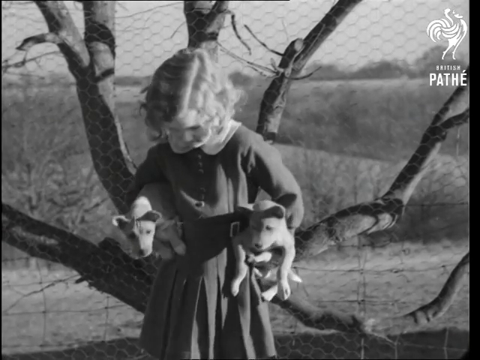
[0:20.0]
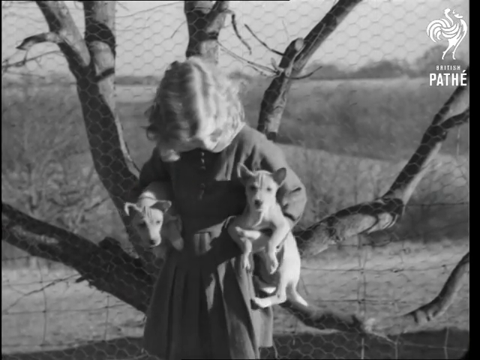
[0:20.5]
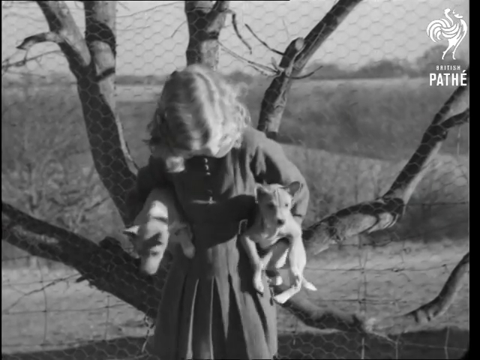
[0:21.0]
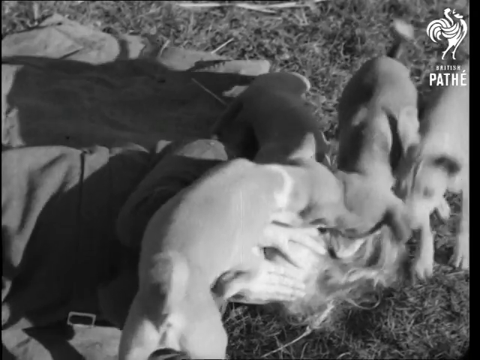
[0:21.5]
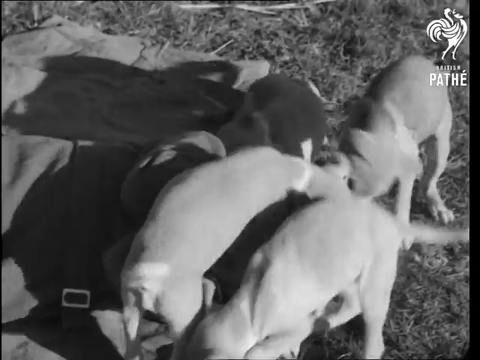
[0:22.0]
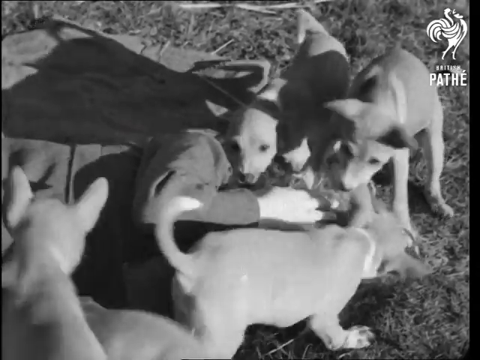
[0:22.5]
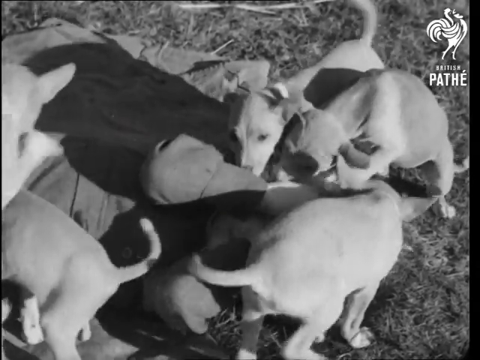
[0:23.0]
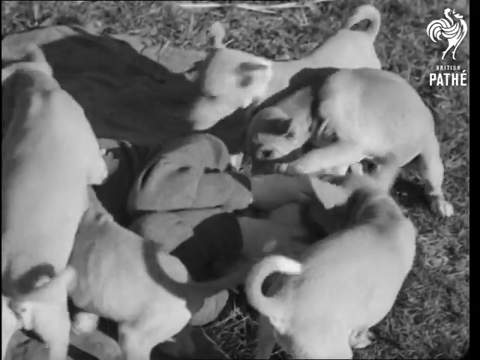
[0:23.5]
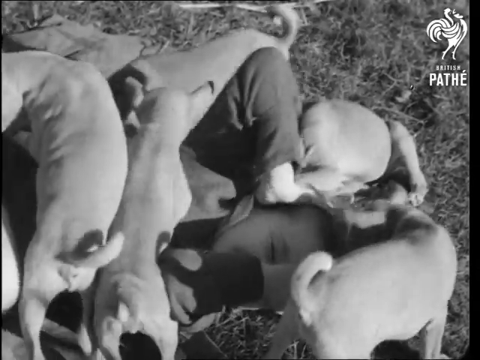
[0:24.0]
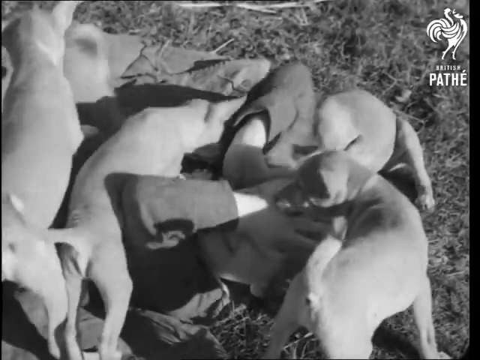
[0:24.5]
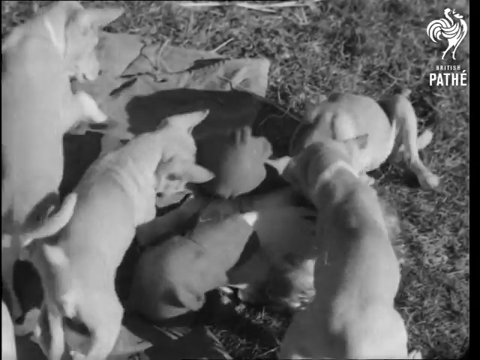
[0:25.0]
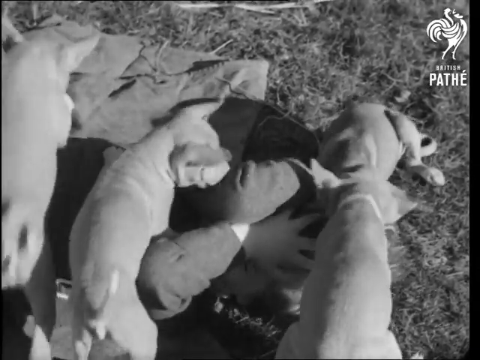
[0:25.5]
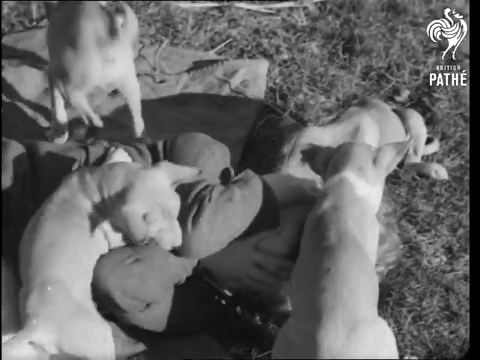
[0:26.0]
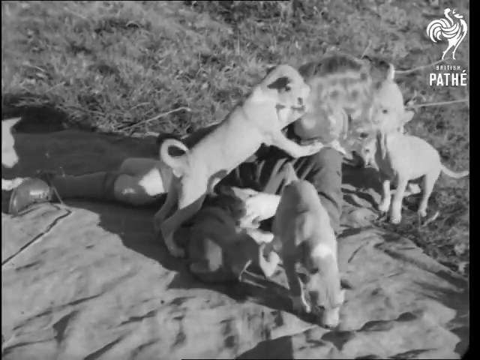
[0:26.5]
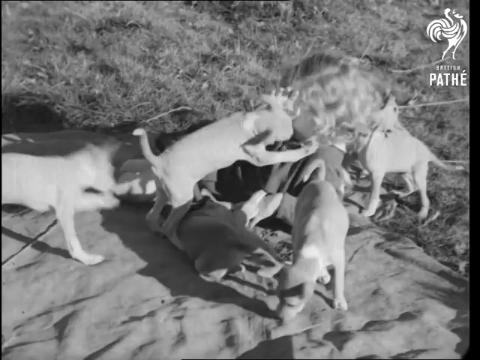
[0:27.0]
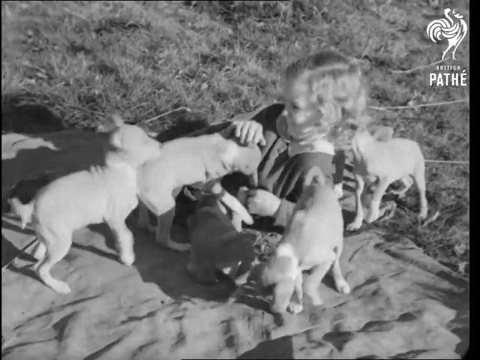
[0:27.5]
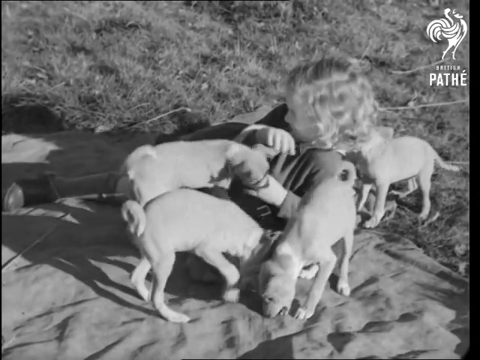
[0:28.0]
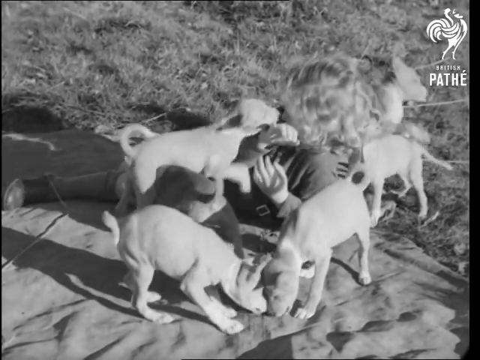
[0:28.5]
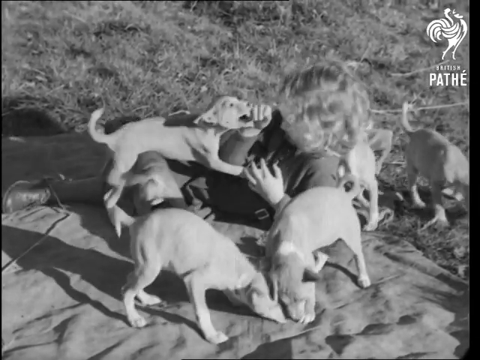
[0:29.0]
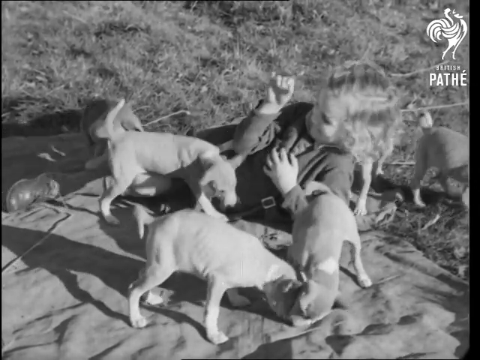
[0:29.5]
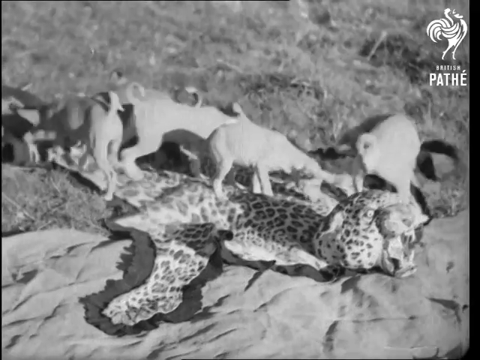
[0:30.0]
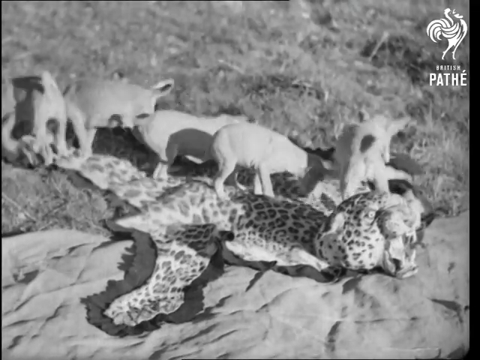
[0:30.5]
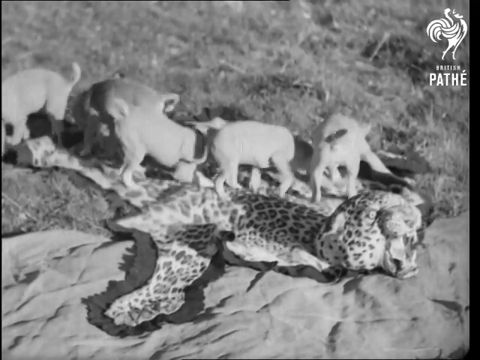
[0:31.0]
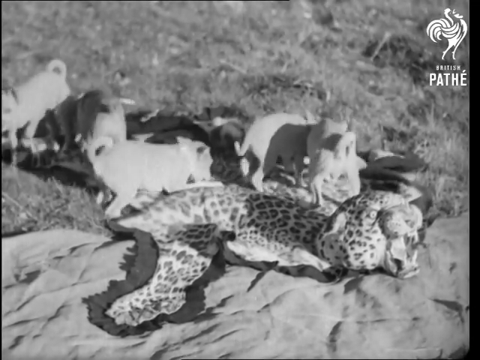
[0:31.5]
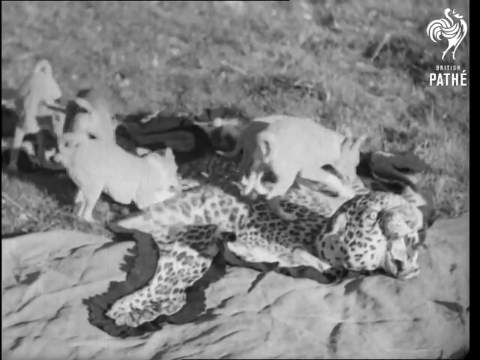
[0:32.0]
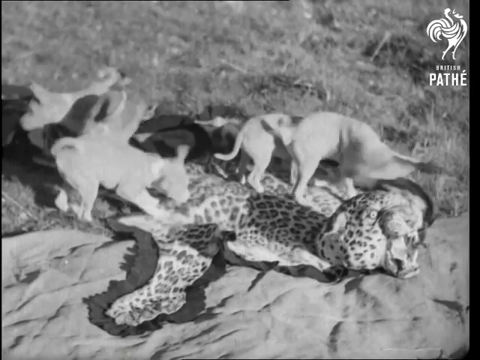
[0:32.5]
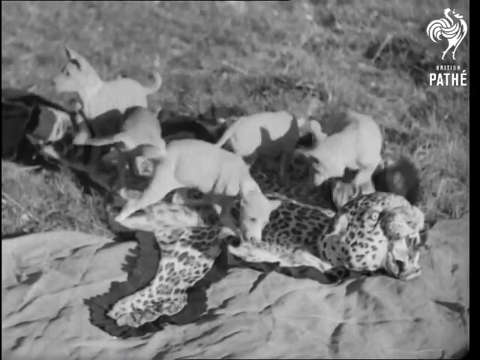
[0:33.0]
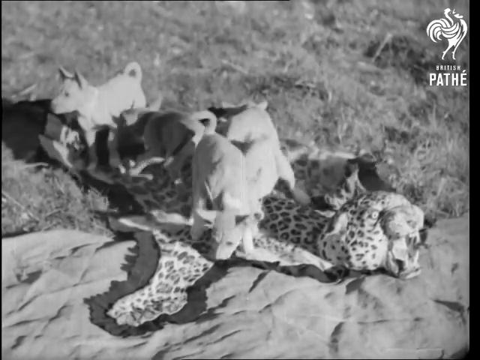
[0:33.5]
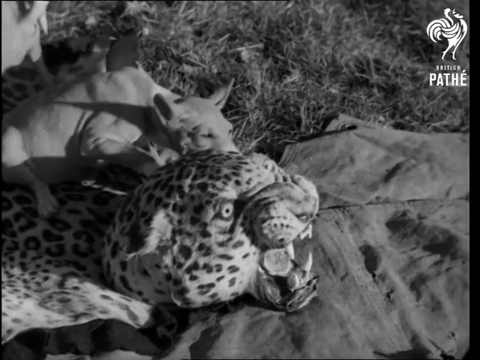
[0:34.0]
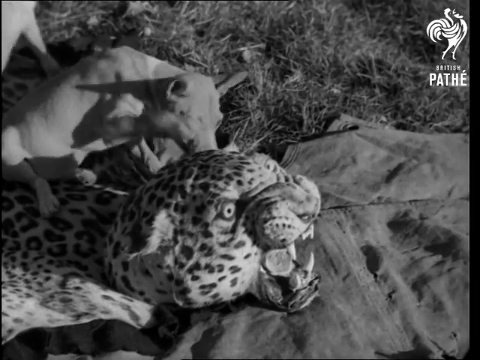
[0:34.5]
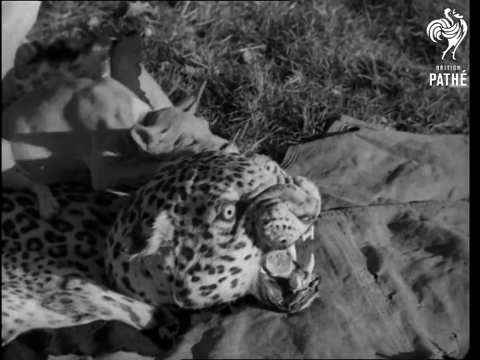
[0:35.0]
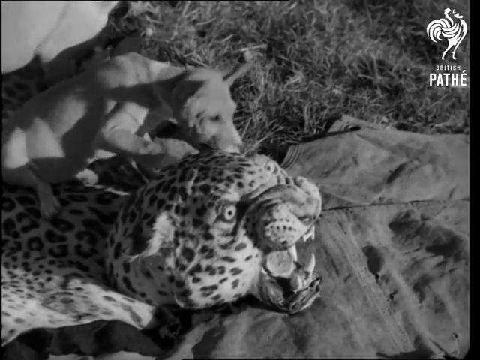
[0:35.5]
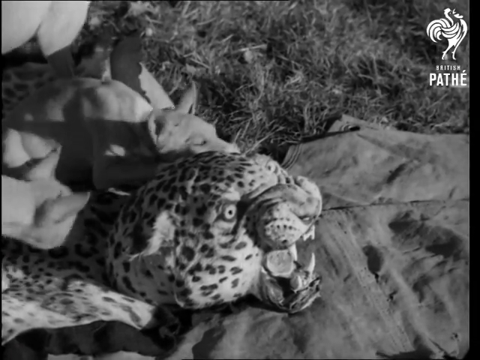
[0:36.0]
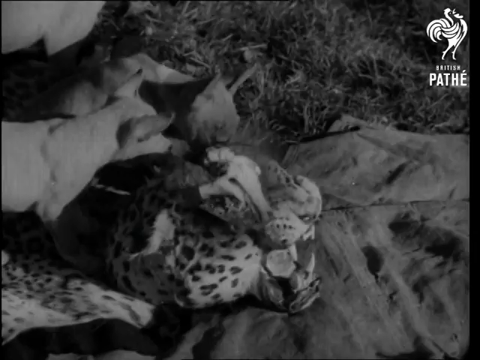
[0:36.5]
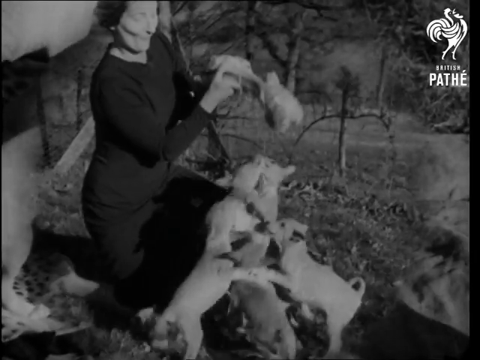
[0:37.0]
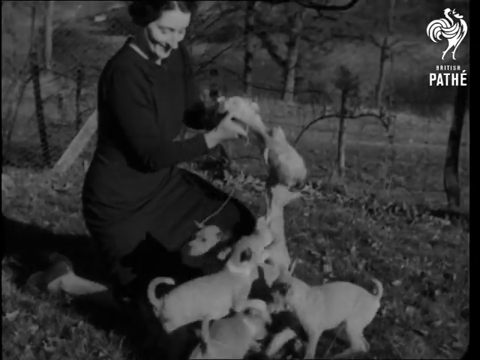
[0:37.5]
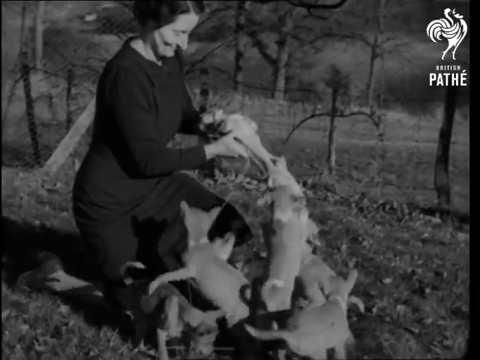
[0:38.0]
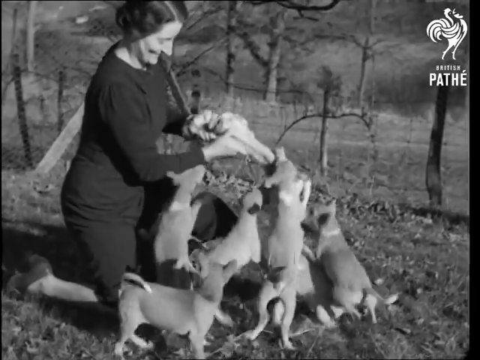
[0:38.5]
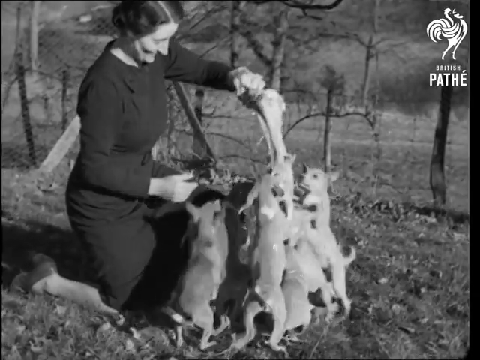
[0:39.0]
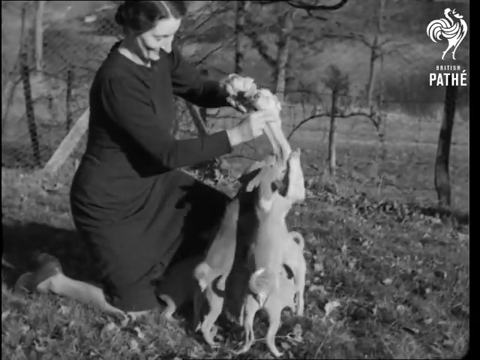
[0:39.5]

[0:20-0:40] In a black and white image, a girl holds two puppies. The video cuts to what appears to be four puppies, all seemingly on top of the little girl as she covers her face and plays with them. She appears to be trying to get up but is still covering her face. Another angle shows the puppies playing on what looks like a leopard rug, with the leopard's face still attached. A woman is shown with a giant bone, and the puppies jump up trying to eat it. The video cuts back to the little girl lying on the floor on a blanket while the puppies play with her; she seems to be enjoying it, as a smile is visible on her face.